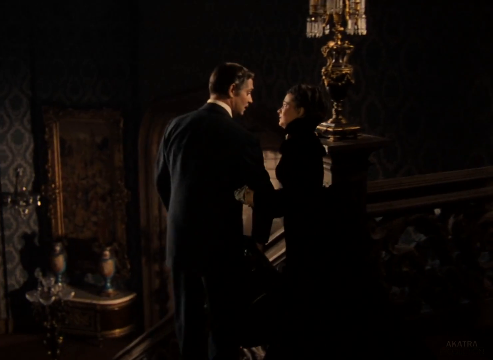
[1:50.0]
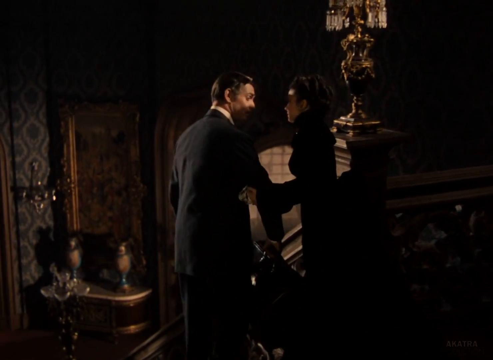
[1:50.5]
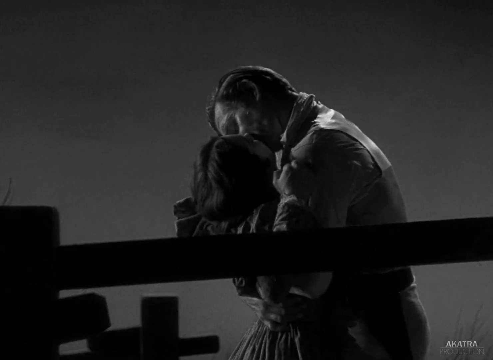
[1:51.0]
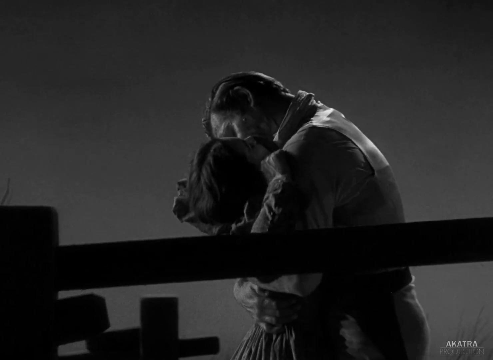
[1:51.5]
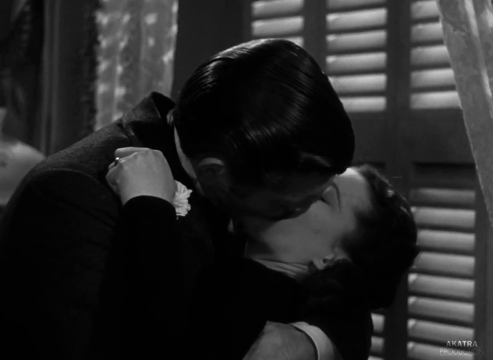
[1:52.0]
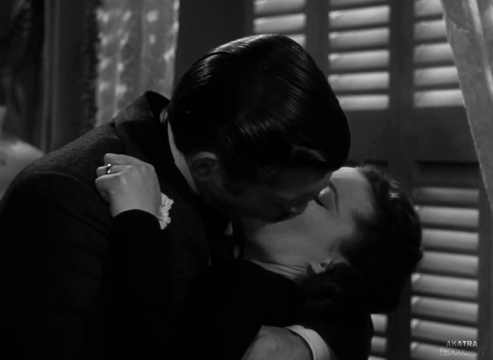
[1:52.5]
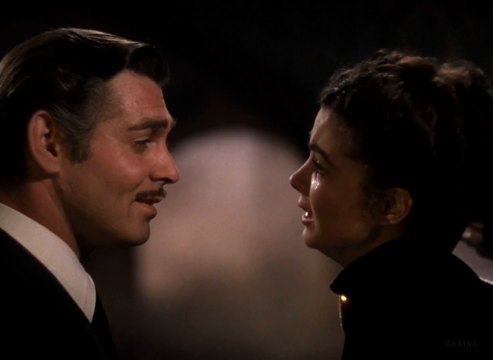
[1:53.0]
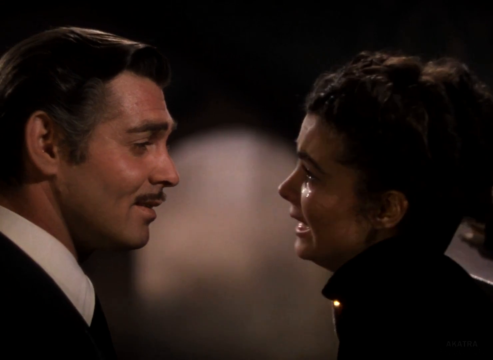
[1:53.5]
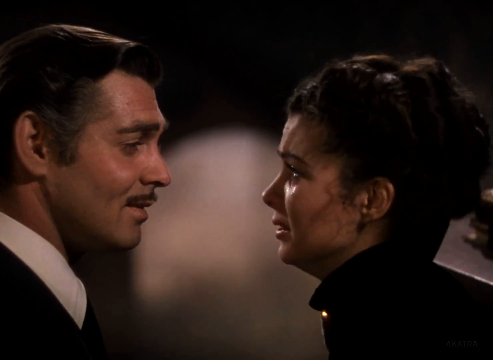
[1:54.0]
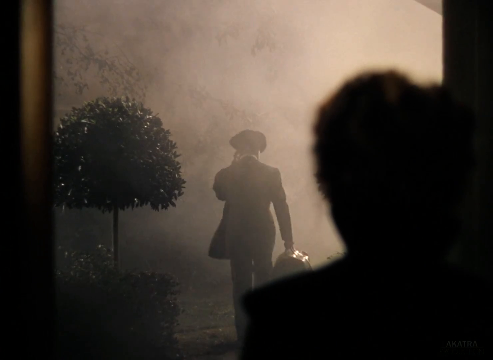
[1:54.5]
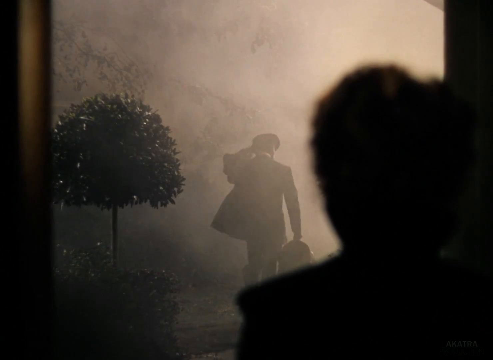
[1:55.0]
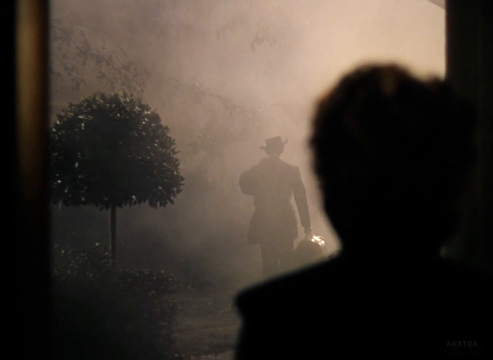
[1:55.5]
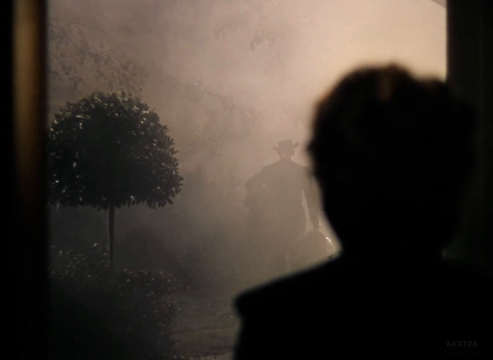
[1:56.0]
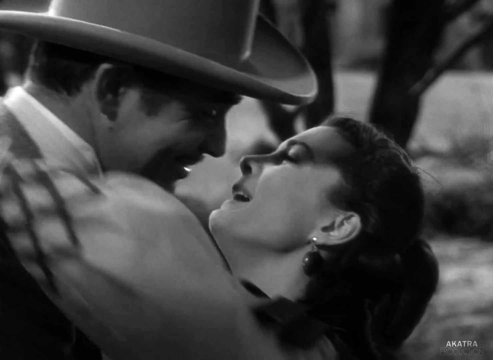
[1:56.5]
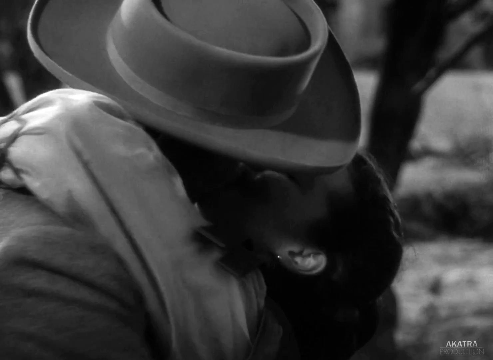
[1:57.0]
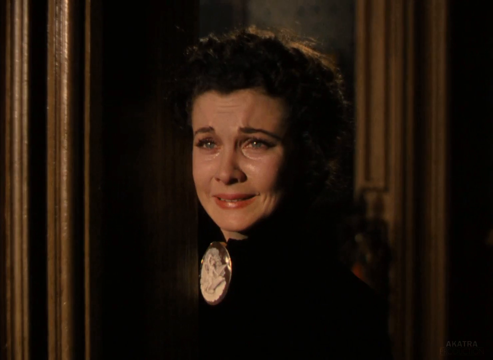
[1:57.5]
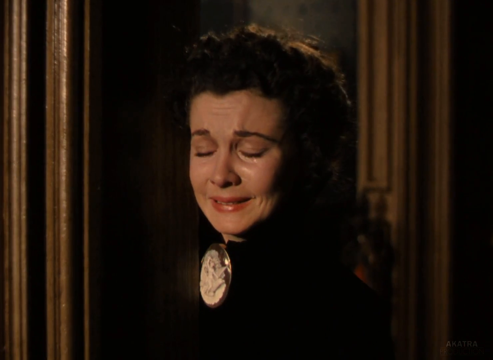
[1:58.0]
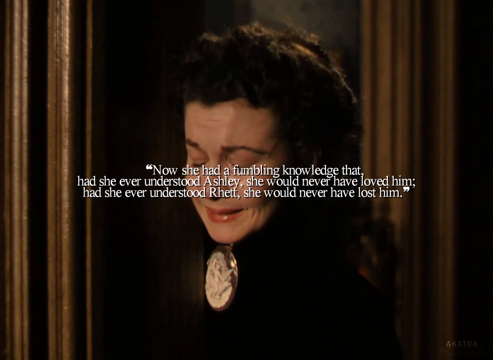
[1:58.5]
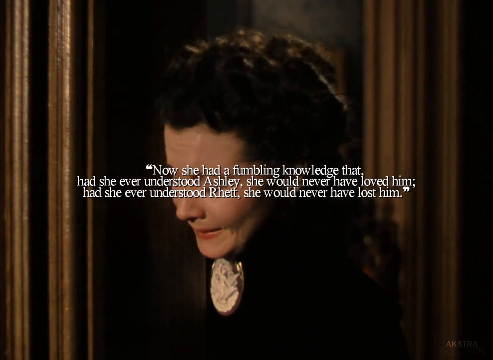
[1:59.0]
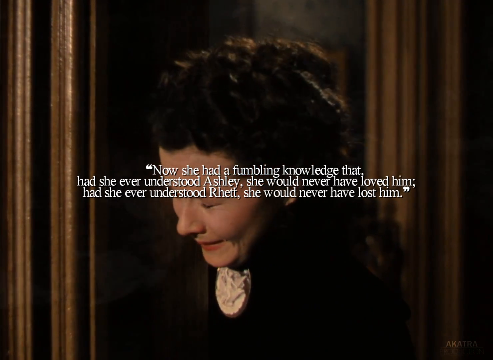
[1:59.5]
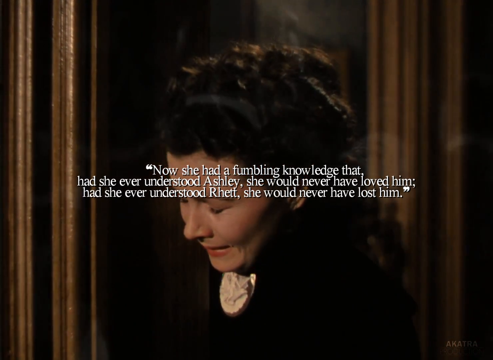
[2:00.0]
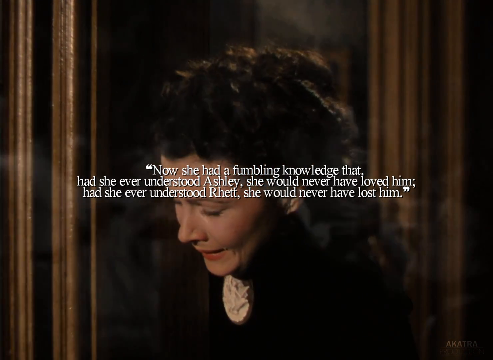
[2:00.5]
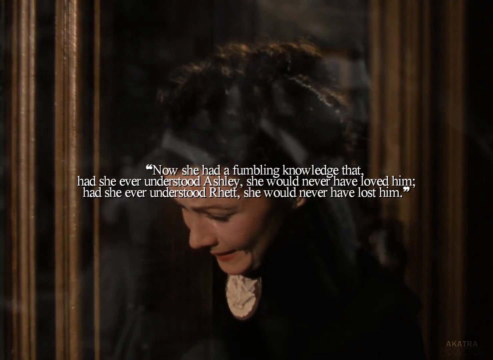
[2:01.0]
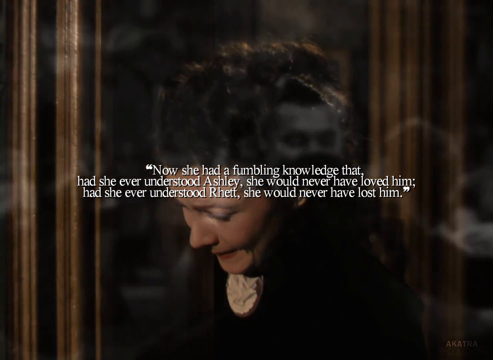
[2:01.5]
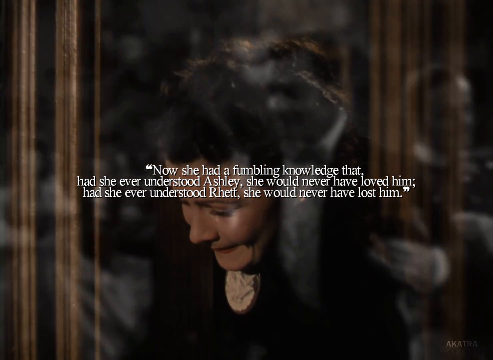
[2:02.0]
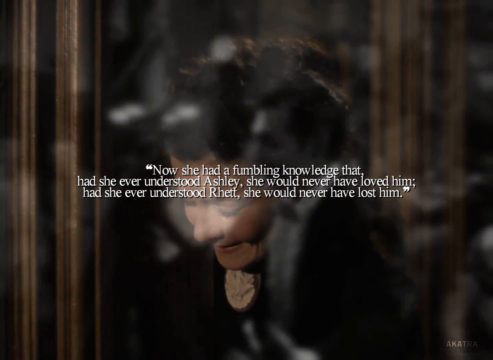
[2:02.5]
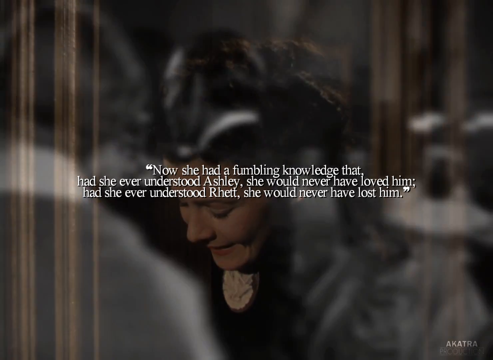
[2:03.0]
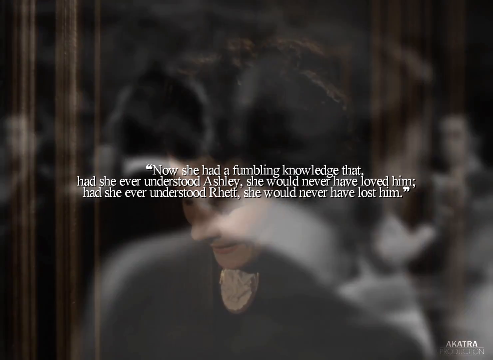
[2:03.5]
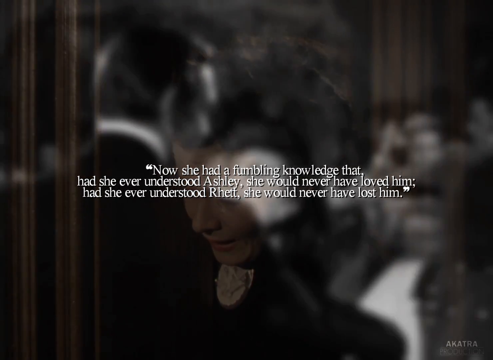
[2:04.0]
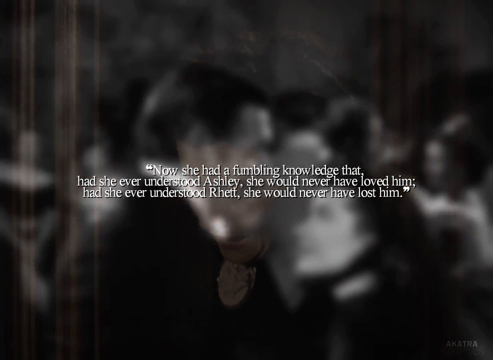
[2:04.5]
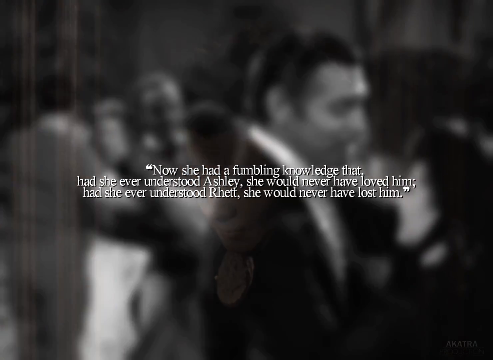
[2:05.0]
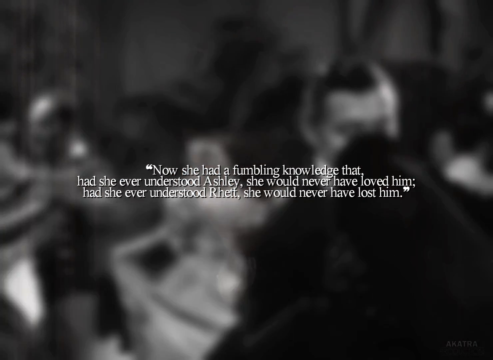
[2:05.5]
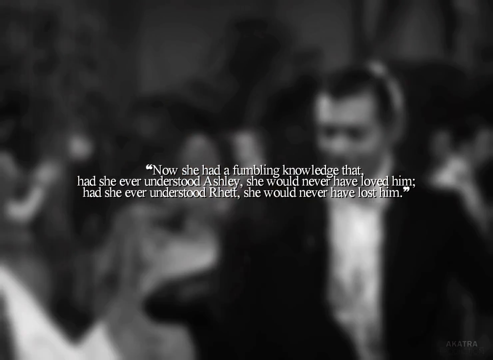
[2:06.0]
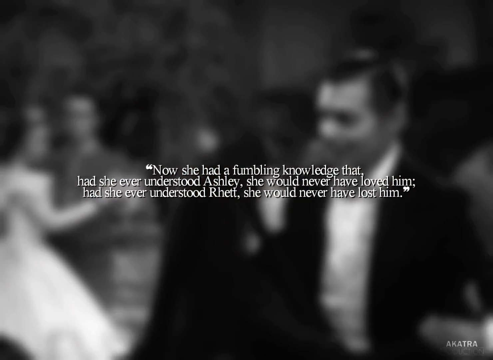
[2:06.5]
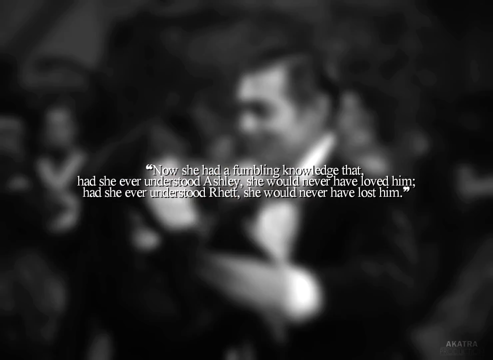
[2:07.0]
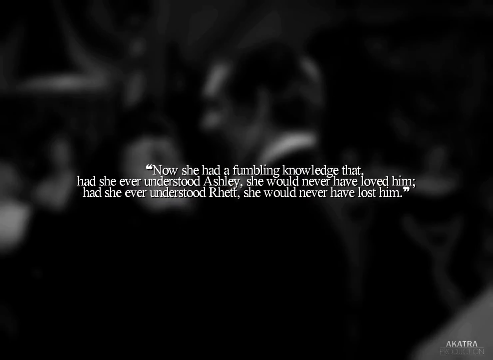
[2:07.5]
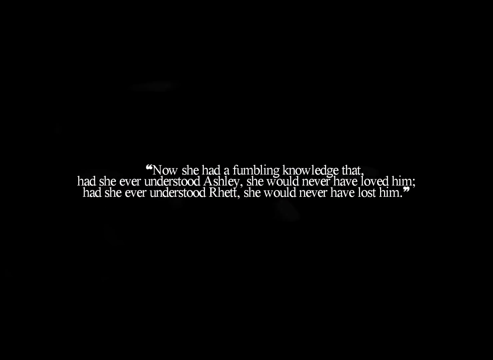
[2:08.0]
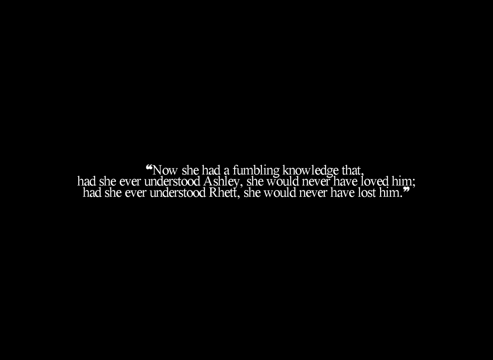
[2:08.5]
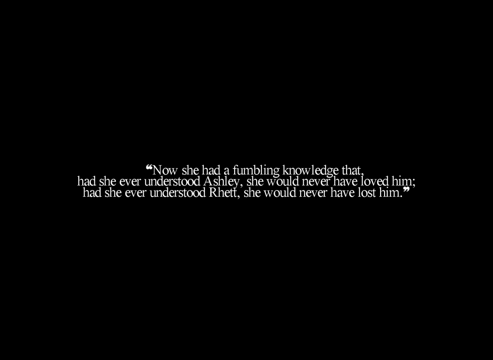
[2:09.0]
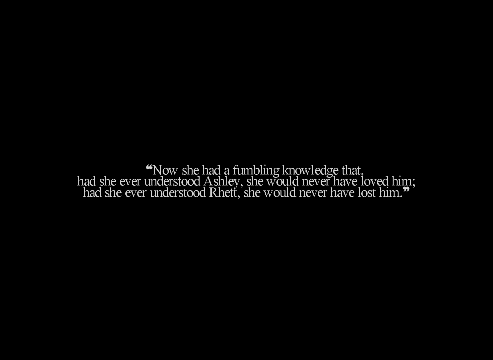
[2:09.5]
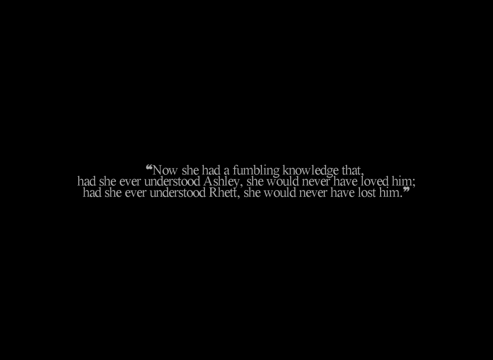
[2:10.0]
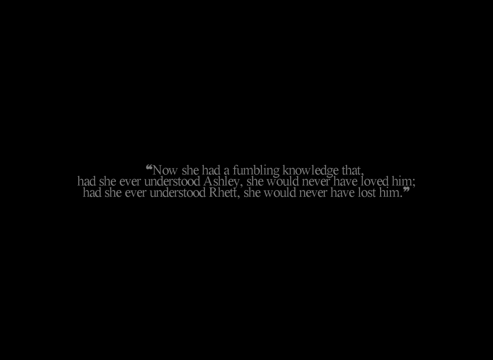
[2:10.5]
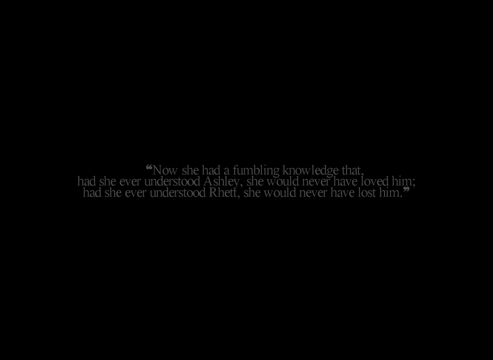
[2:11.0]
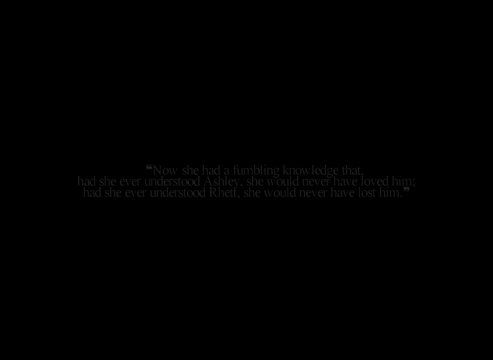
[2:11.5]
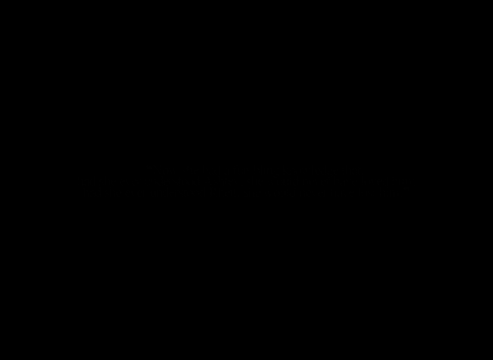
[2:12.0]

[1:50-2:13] Several scenes show the couple kissing inside a building, and then kissing outside. In another scene the man apparently walks away from the woman and puts his hat on, seemingly after visiting her. At the end, the same woman is shown crying, with a quote in the middle of the screen that says "now she had a fumbling knowledge that had she ever understood Ashley, she would have never have loved him. Had she ever understood Rhett, she would never have lost him."